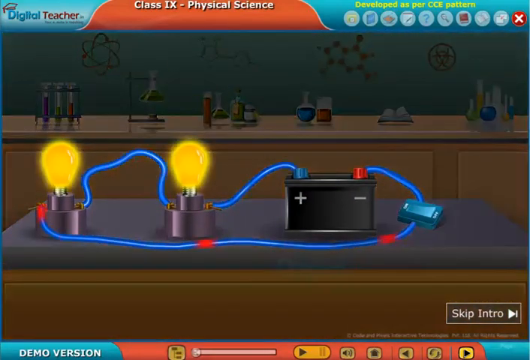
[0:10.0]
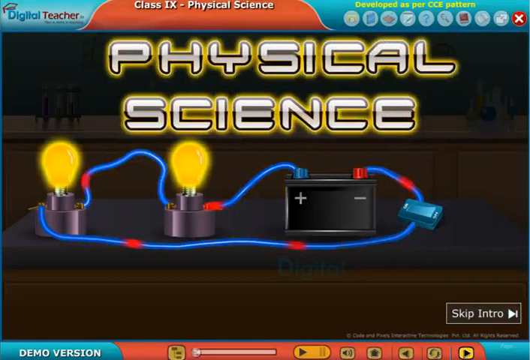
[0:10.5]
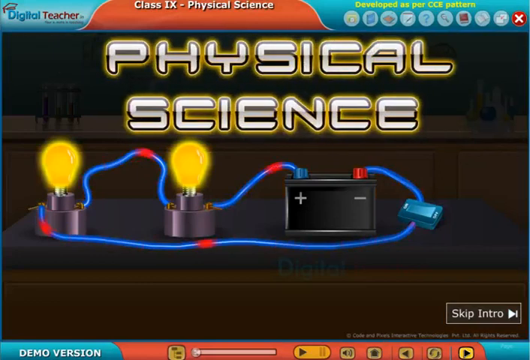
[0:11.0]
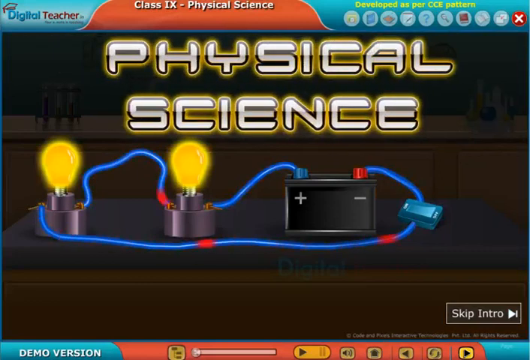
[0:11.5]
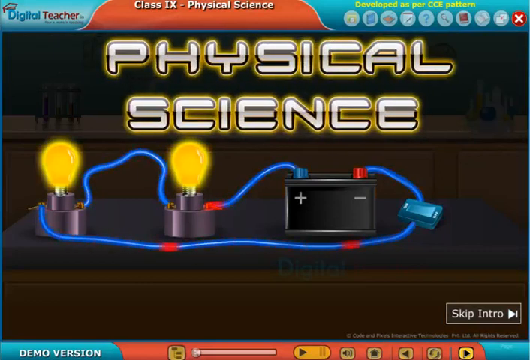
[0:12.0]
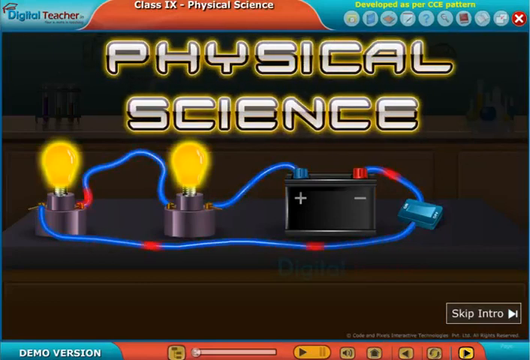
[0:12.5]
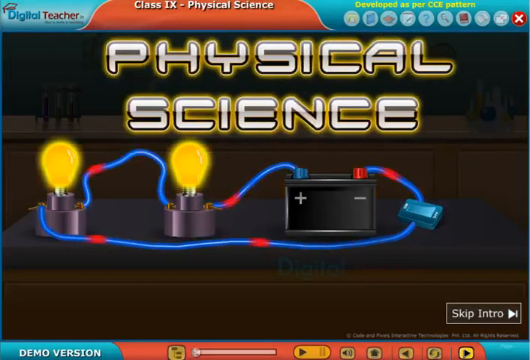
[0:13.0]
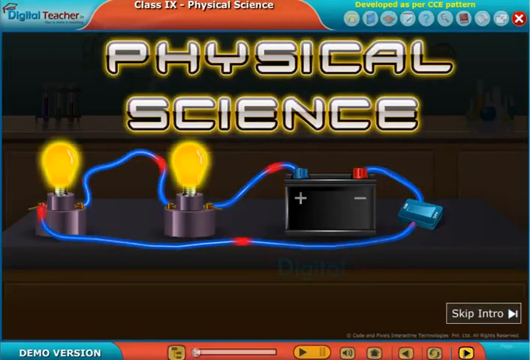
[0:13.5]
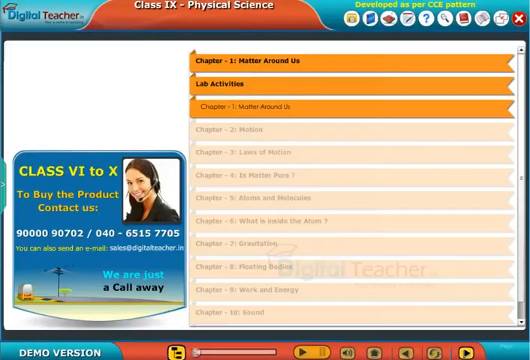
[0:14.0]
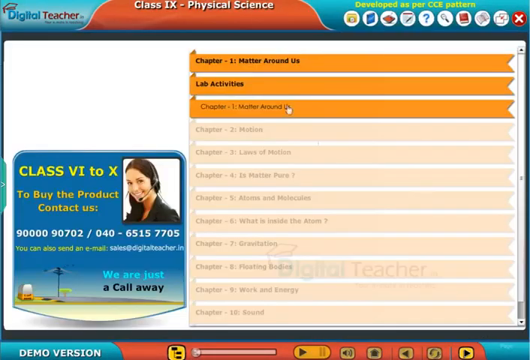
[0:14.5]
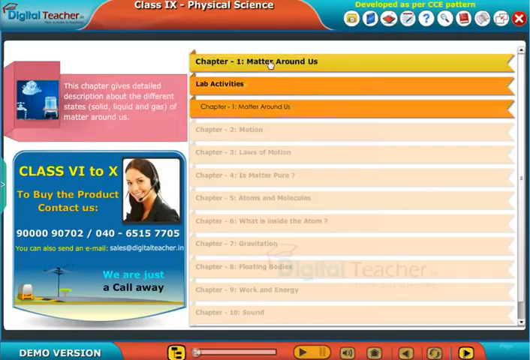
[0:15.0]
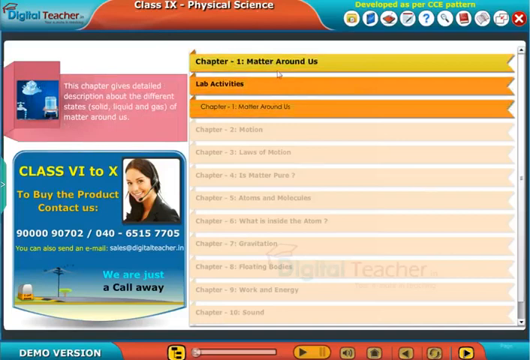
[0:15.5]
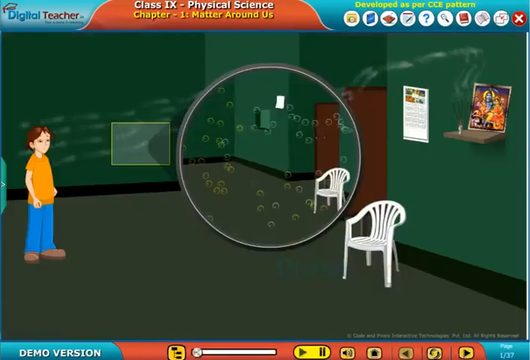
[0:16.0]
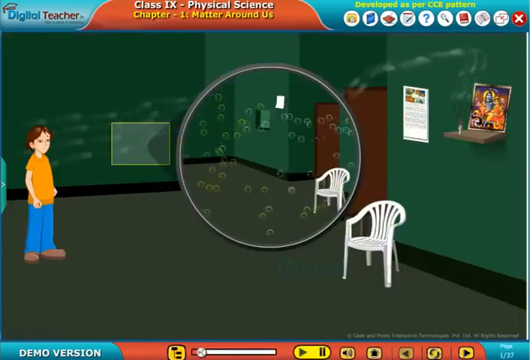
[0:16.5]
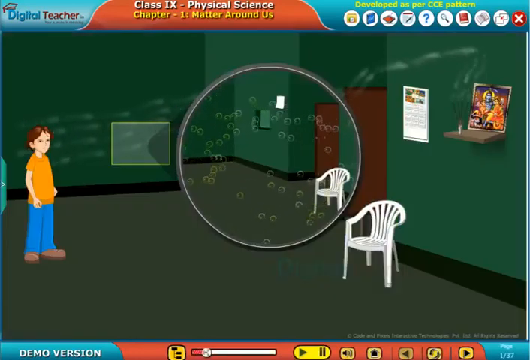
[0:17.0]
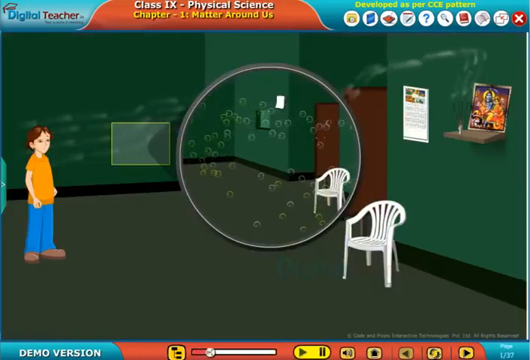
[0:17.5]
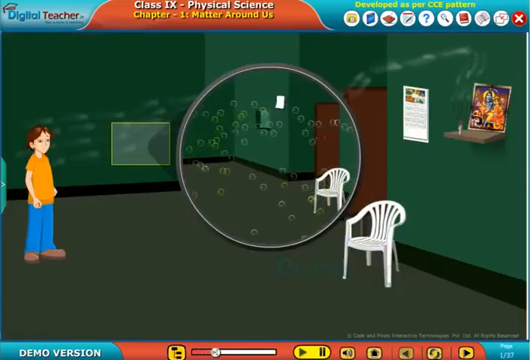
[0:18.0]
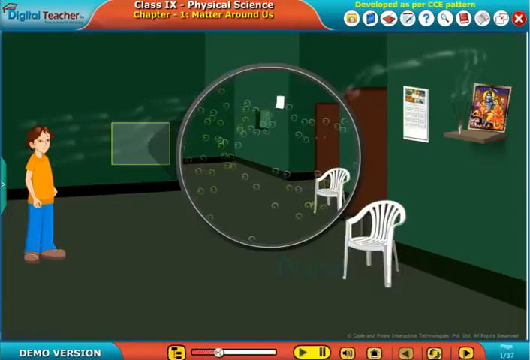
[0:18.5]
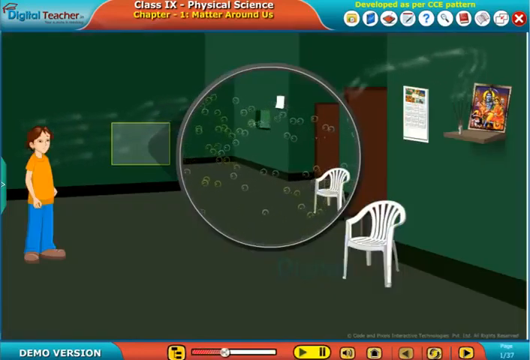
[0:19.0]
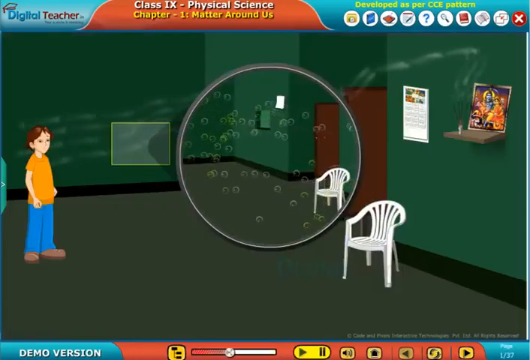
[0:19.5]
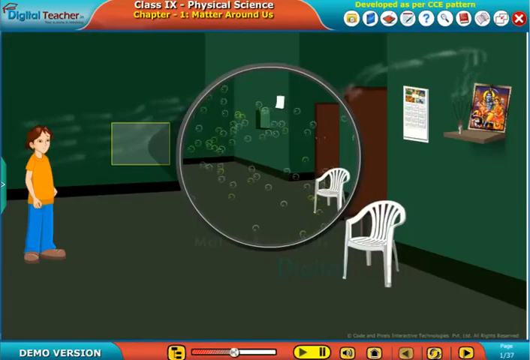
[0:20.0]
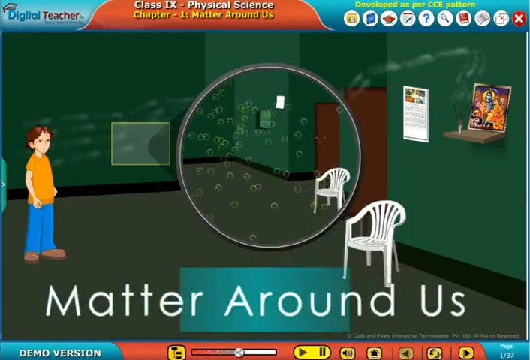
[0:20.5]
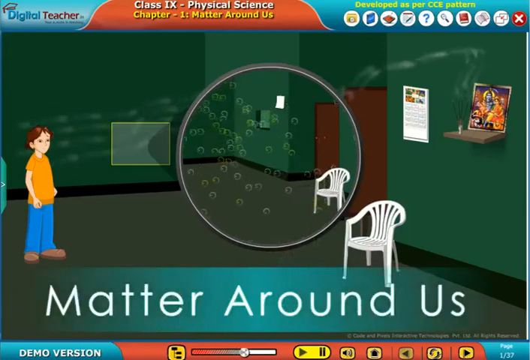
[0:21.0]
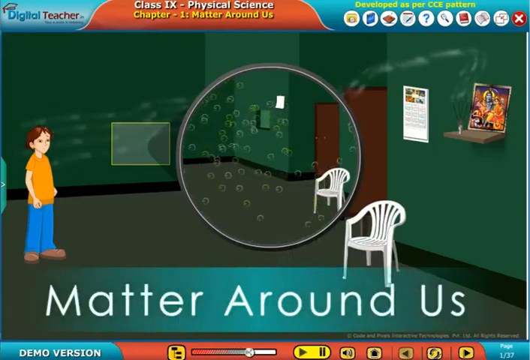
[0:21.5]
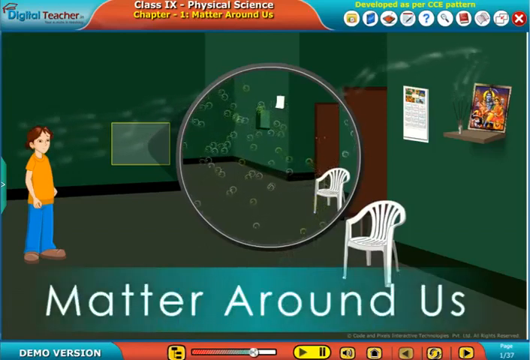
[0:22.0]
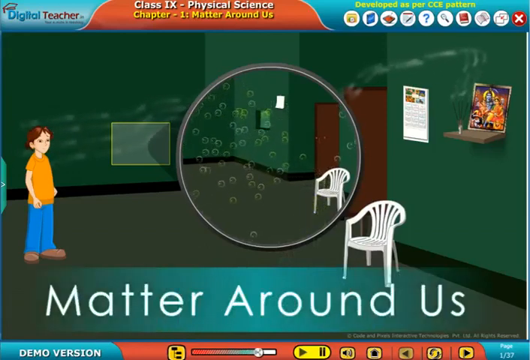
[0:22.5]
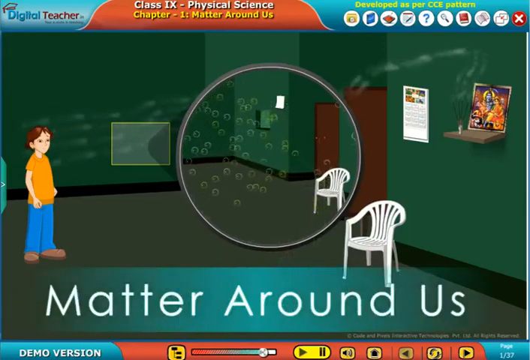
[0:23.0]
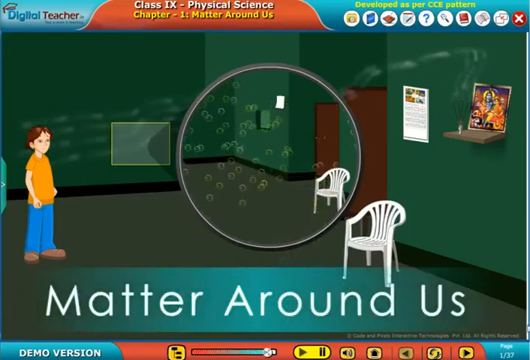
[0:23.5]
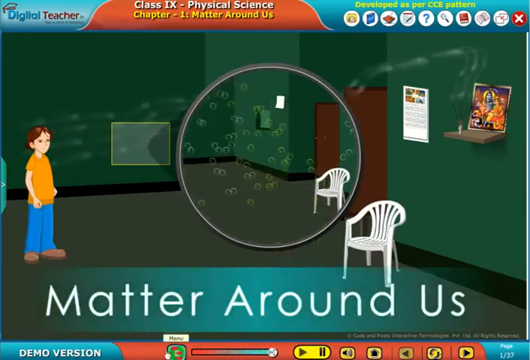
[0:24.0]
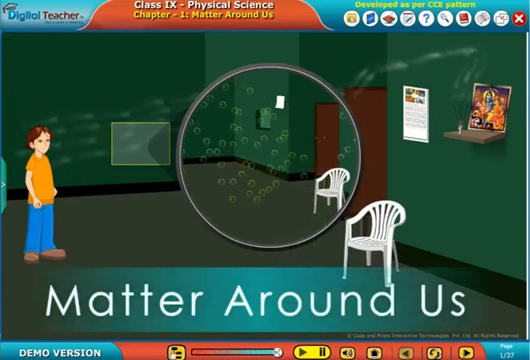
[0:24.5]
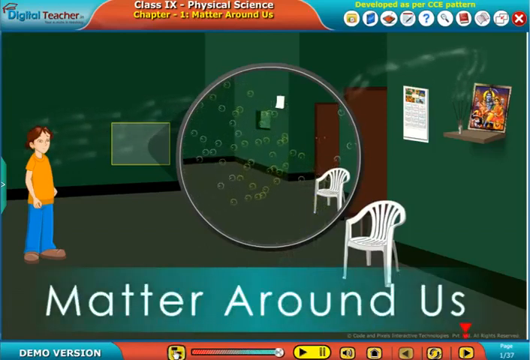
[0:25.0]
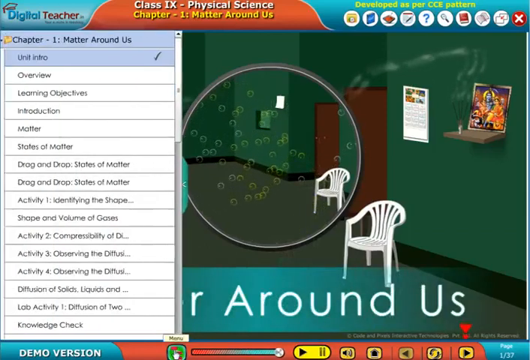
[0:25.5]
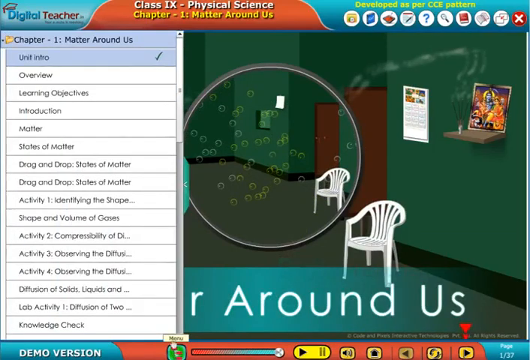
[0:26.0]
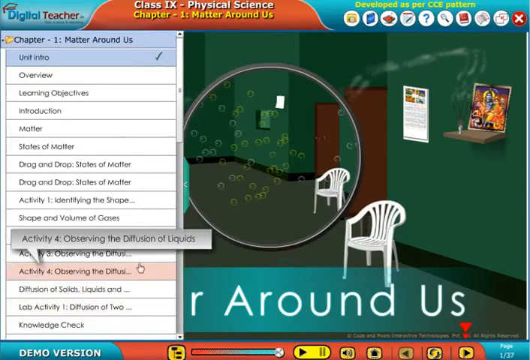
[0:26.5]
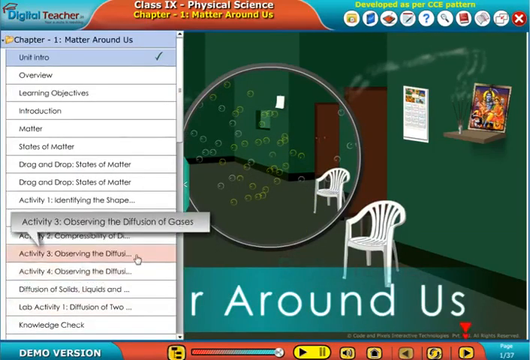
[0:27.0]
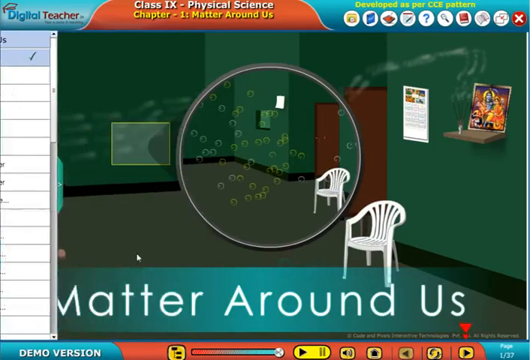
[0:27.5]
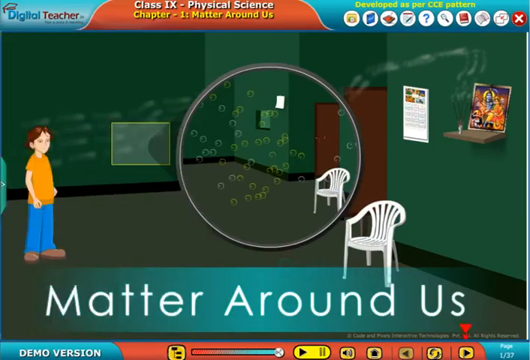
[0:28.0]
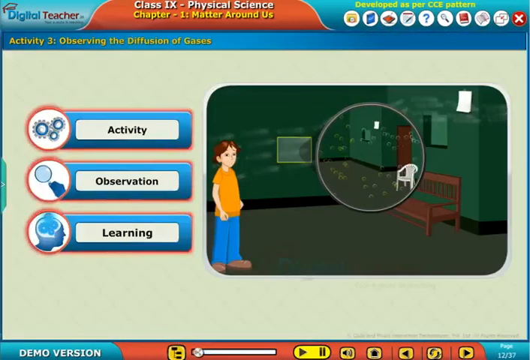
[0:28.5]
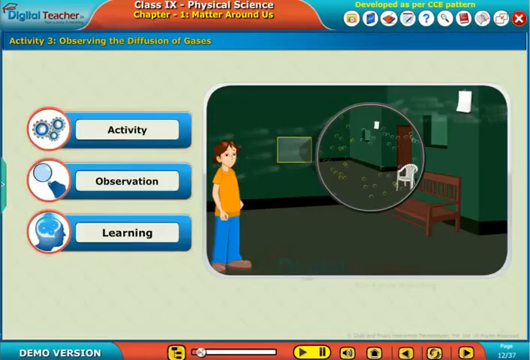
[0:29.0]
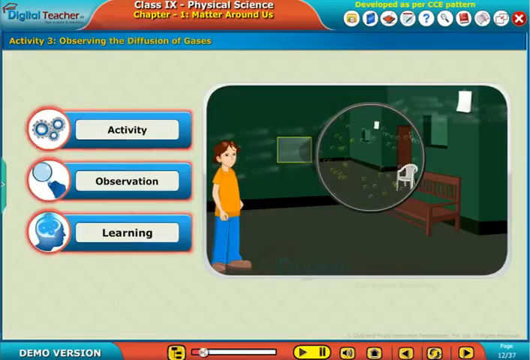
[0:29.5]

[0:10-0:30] The video shows "digital teacher" and "physical science." In the centre is a working station with two bulbs connected to a battery that has two knobs, one red and one blue. Cables come from the battery and connect the two bulbs, and when they are connected, light comes from both bulbs. There is also a big cabinet in which various experiments are shown. The wall is green and a bit blurry on that side, and the cupboards are wooden. In the top corner is written "DEVELOPED as per cce pattern" along with various logos, and at the end there is a red and white X. At the bottom of the video a skip intro button is visible. "Physical science" then appears, along with what appears to be a round thing with bubbles inside, and the words "what matters around us" below it. In a green room, two chairs and one standing person are visible.